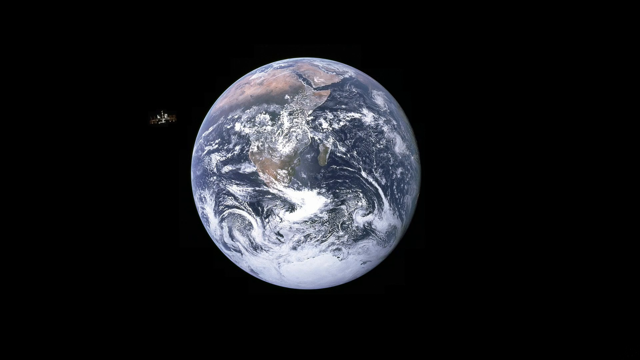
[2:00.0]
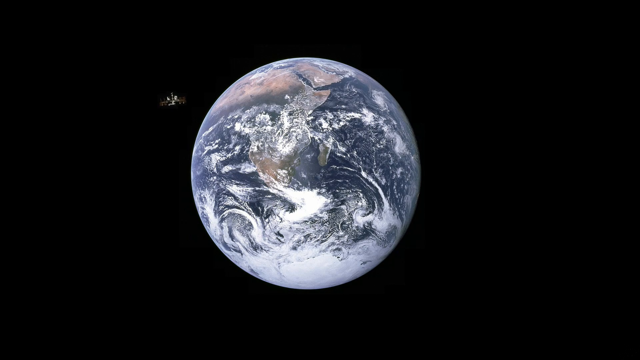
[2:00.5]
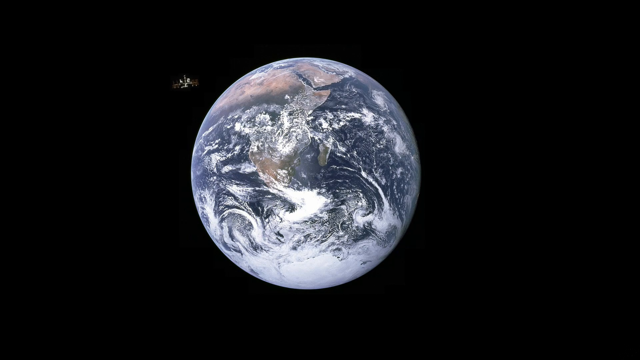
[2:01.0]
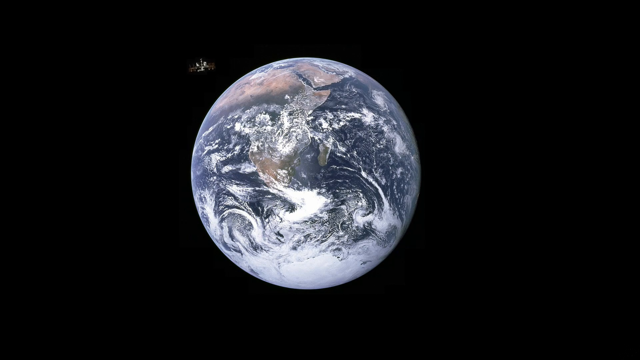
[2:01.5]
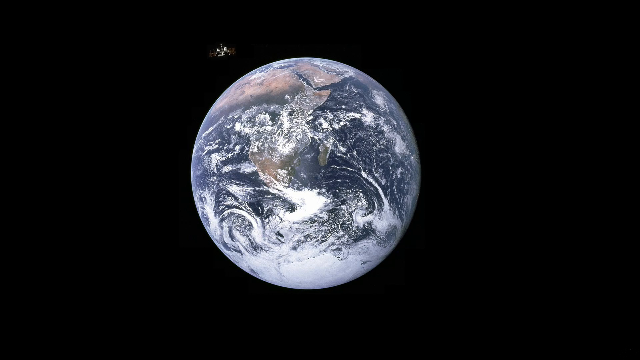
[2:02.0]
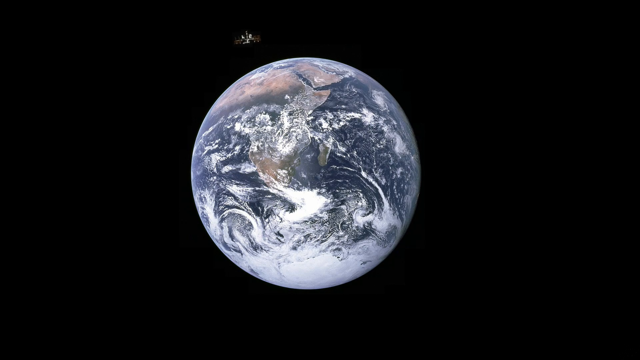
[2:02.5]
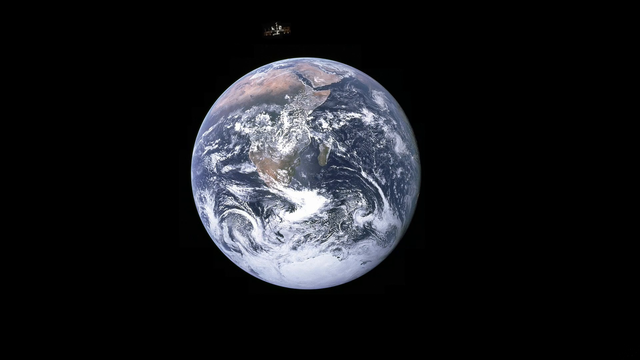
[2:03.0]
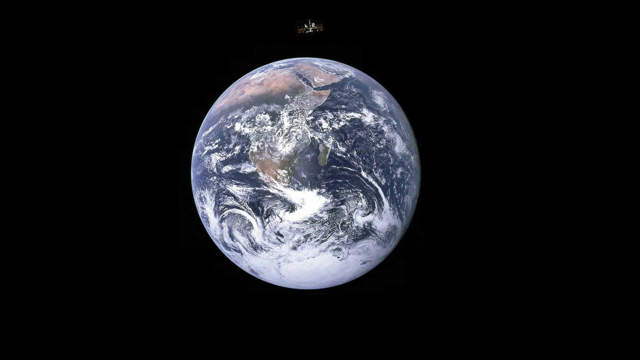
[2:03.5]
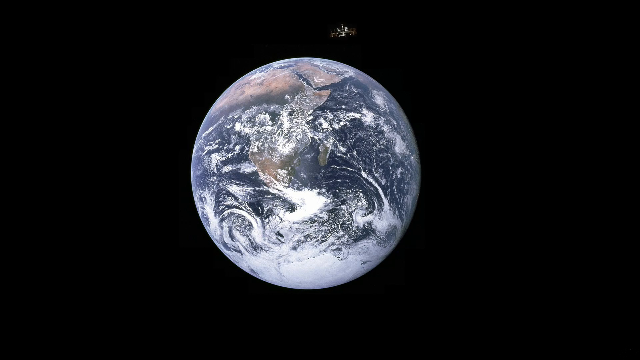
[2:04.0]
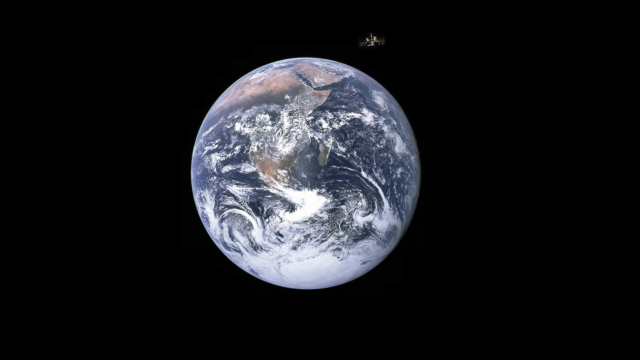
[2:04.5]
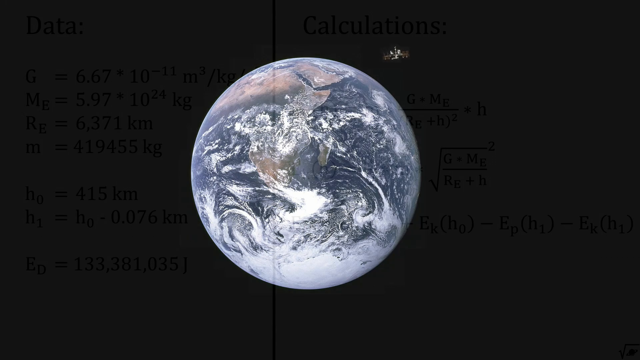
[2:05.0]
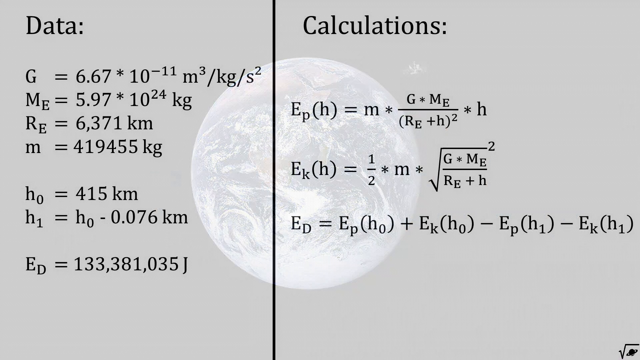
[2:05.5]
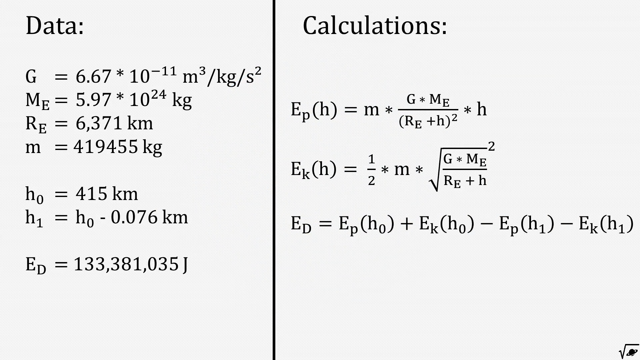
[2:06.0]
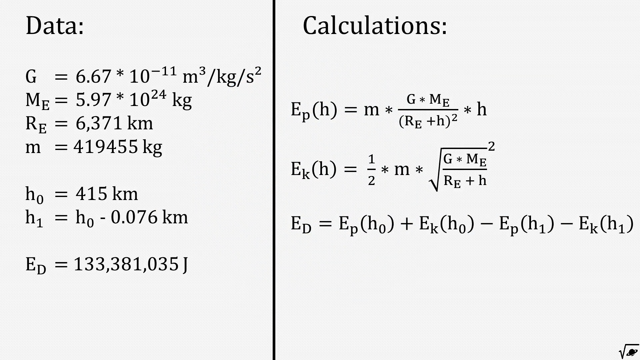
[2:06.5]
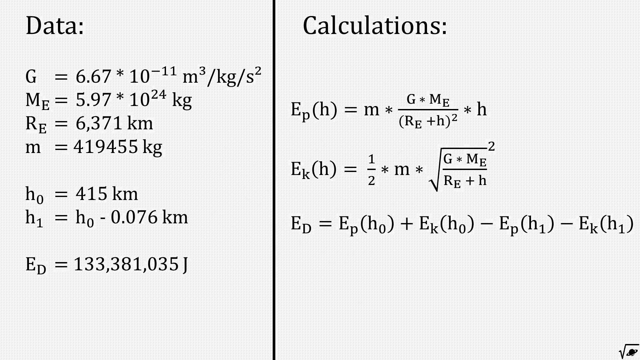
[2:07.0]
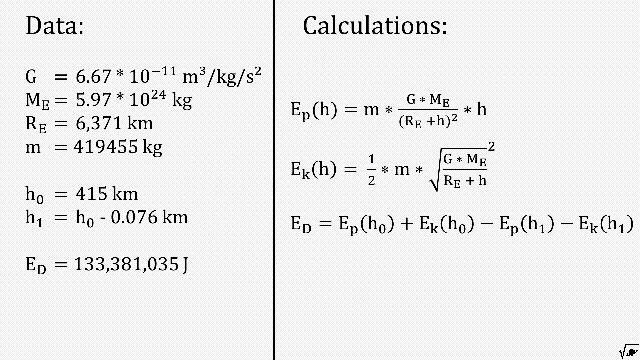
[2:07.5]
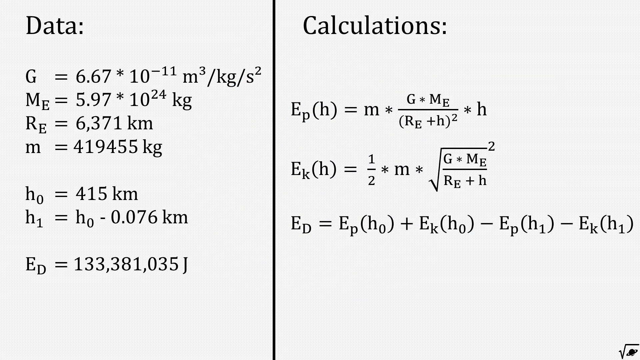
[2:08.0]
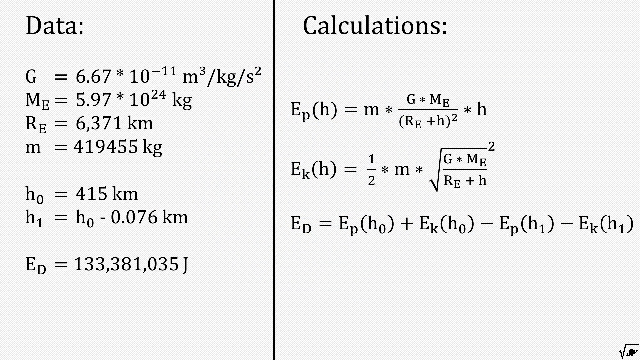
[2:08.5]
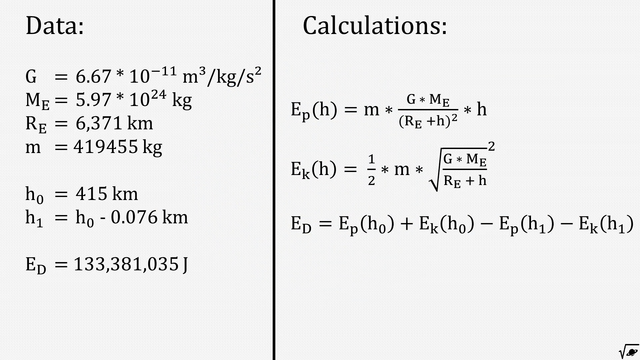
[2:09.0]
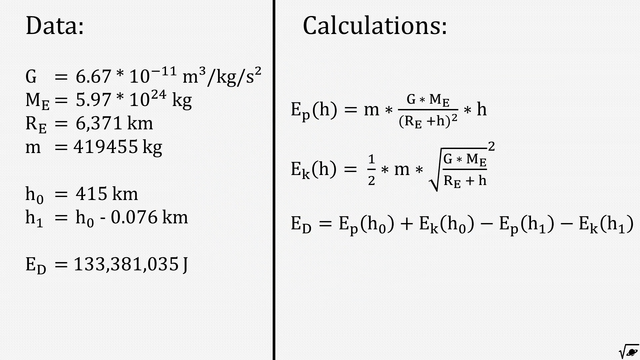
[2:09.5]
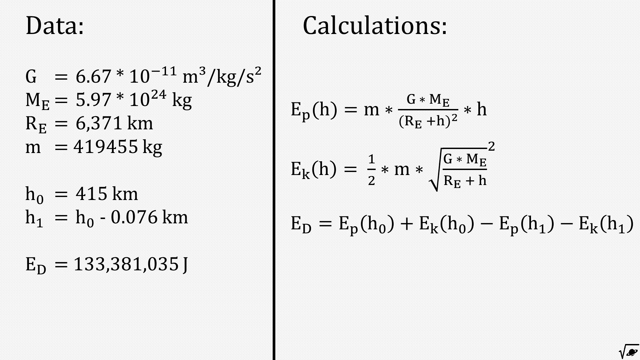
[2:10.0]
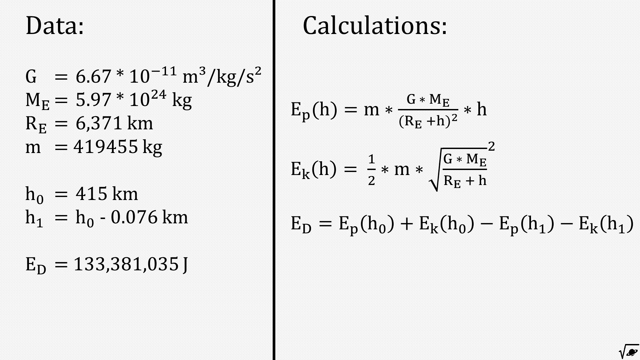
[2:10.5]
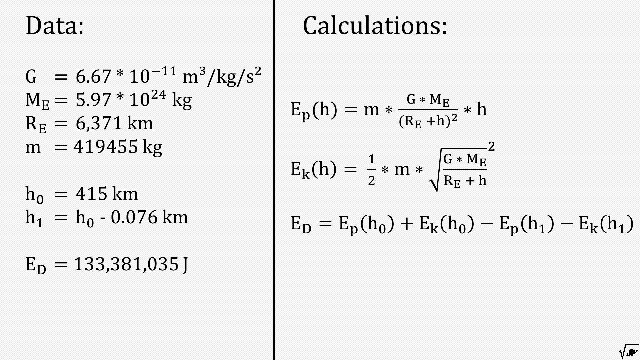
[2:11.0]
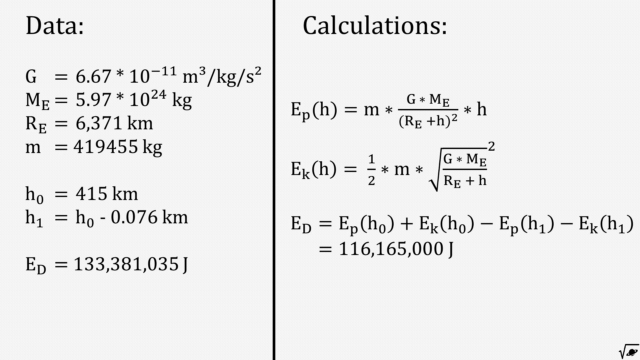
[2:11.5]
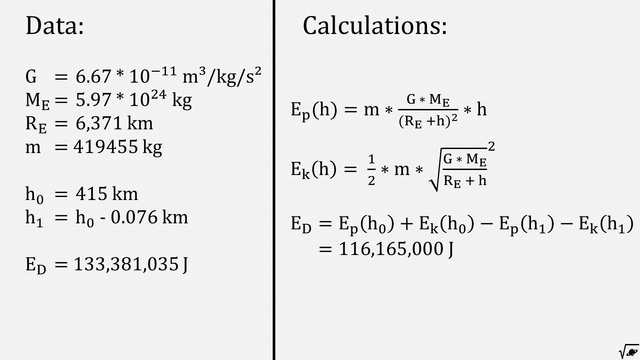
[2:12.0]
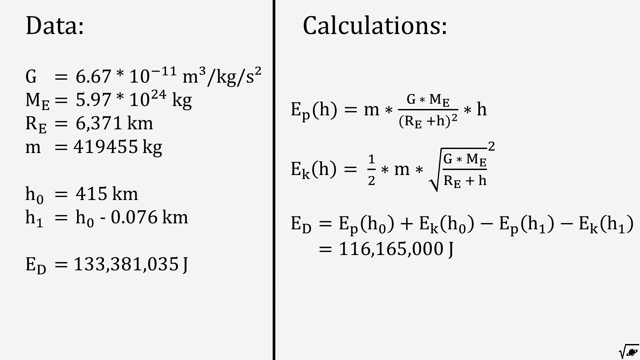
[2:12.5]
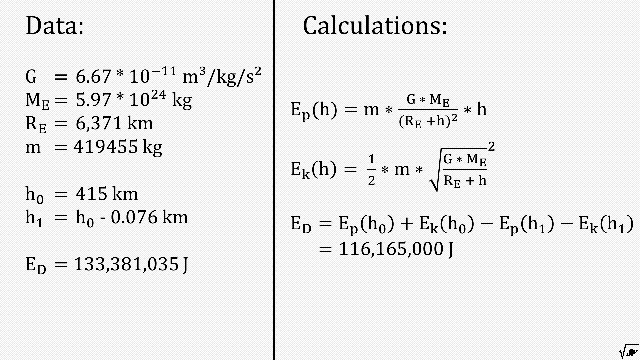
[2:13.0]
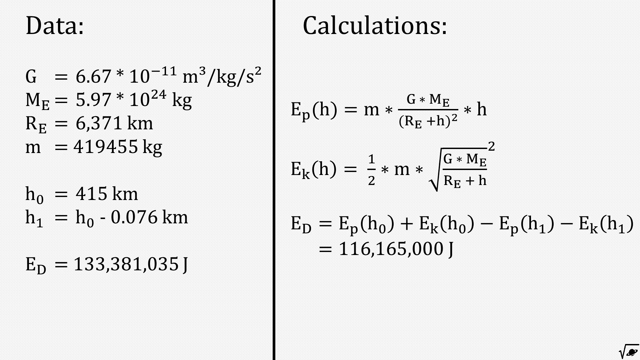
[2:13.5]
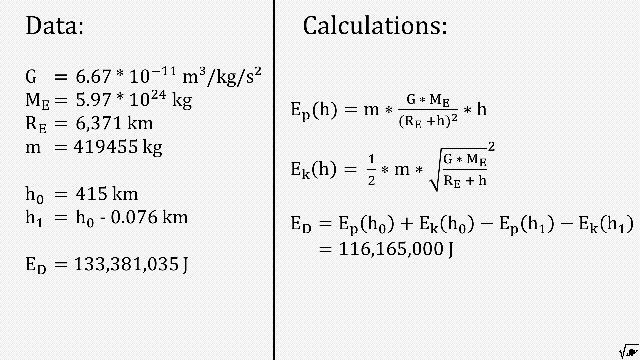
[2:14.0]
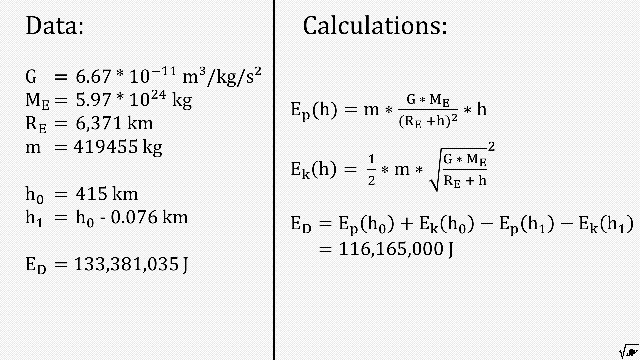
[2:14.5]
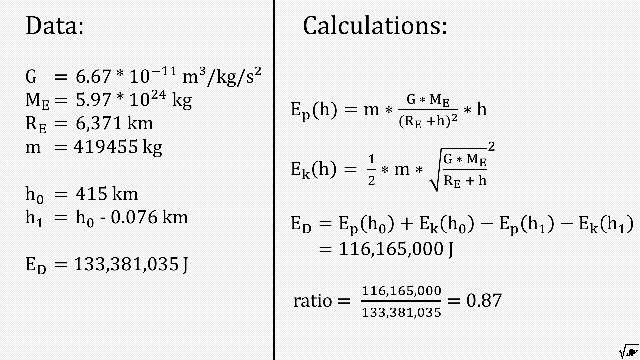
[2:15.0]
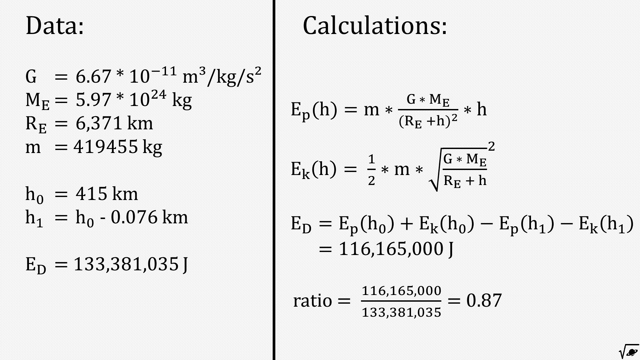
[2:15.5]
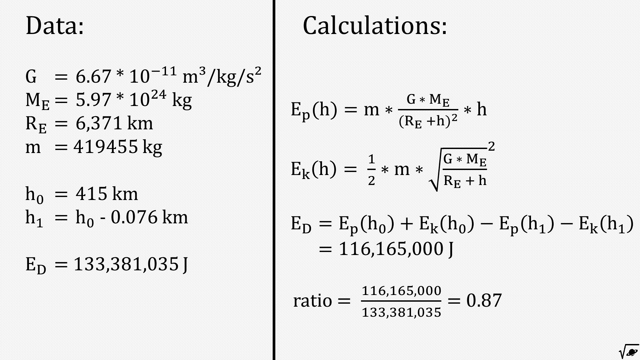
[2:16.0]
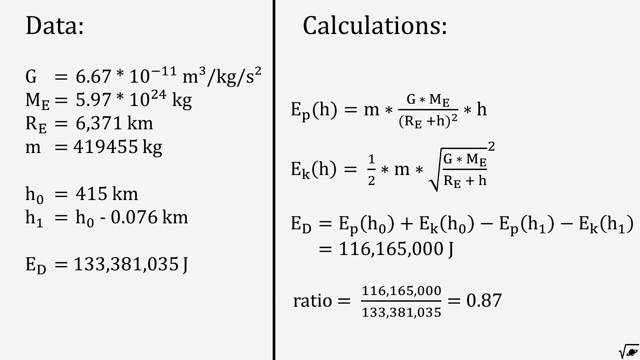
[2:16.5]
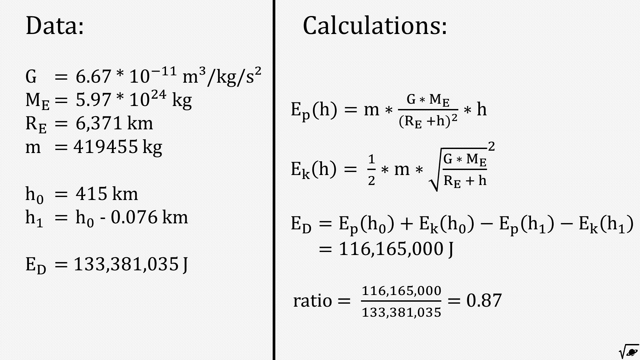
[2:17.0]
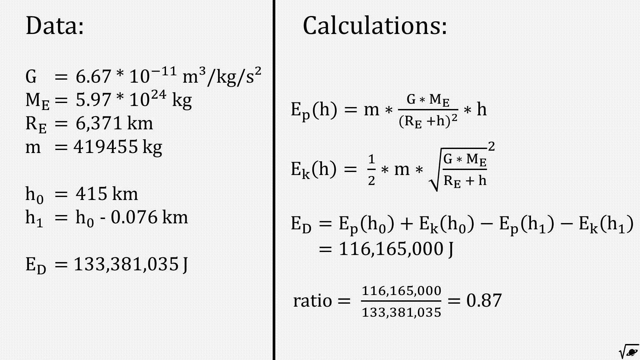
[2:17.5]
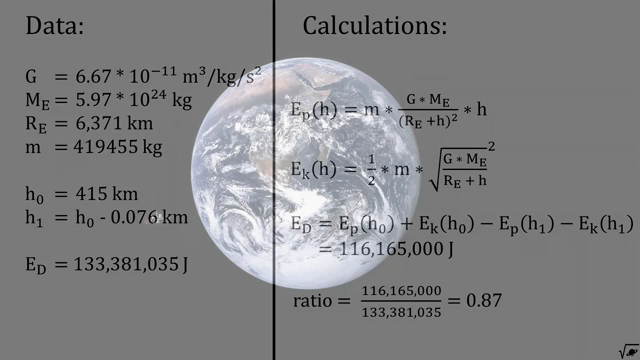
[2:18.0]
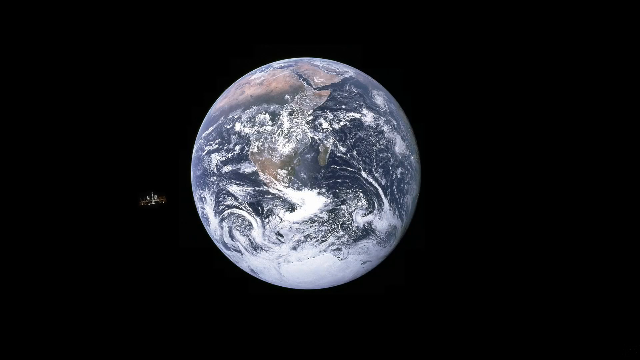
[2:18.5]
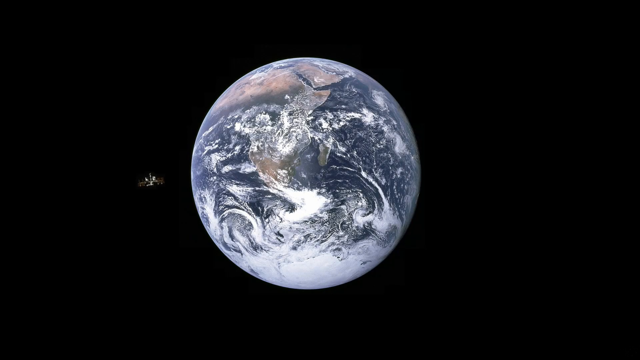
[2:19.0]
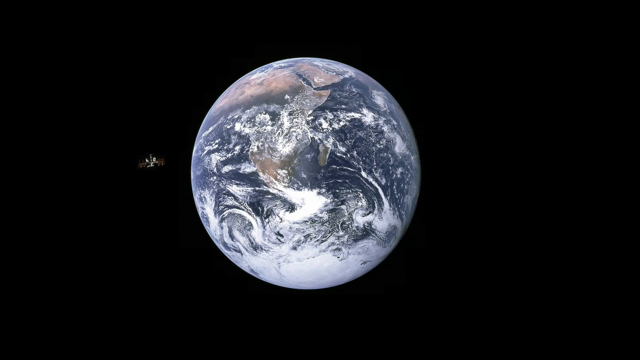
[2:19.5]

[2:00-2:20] Against a black background, the earth appears as a sphere in the middle. On the left side is apparently the satellite, shaped like the letter H; it goes higher up and then down, circling the earth. The page with data and calculations returns. The data side shows G = 6.7 × 10^-11, Me = 5.9 × 10^24 kg, Re = 6,371 km, m = 419455 kg, Ho = 410 km, and H1 = Ho − 0.076 km. The calculations include an Ed value and a ratio of that number over another, equal to 0.87. Then the globe of the Earth is shown again.